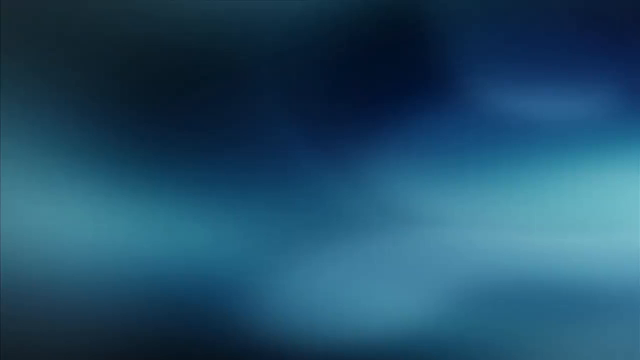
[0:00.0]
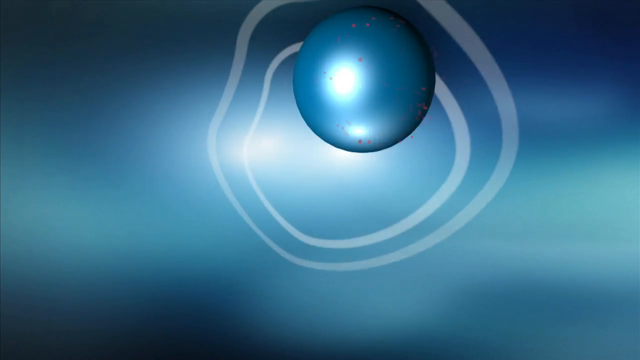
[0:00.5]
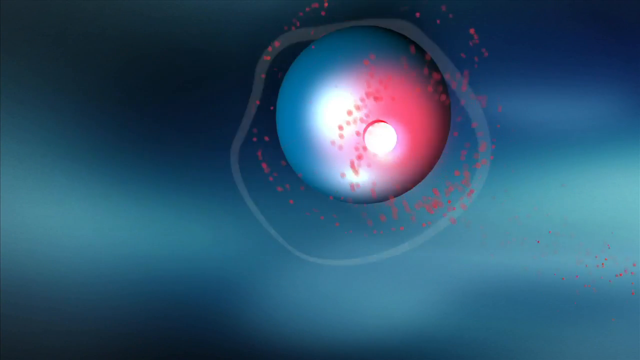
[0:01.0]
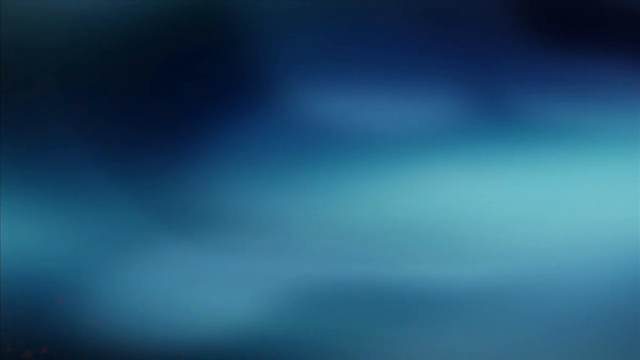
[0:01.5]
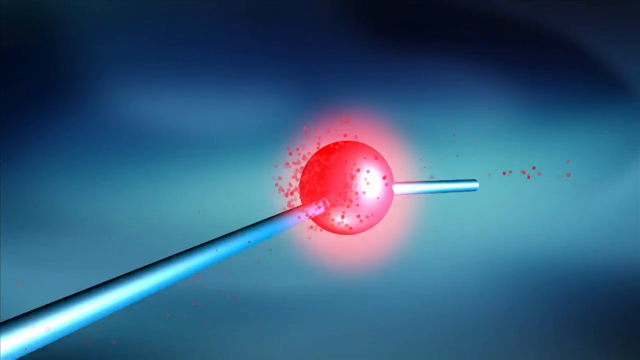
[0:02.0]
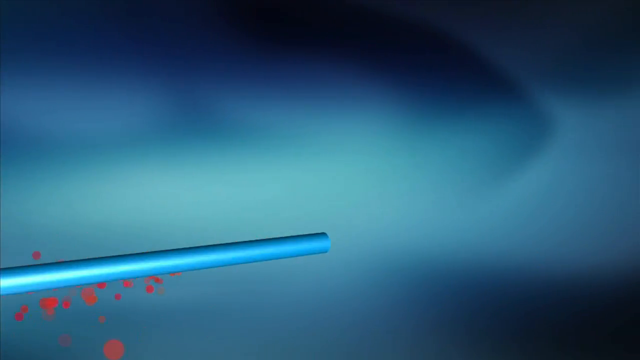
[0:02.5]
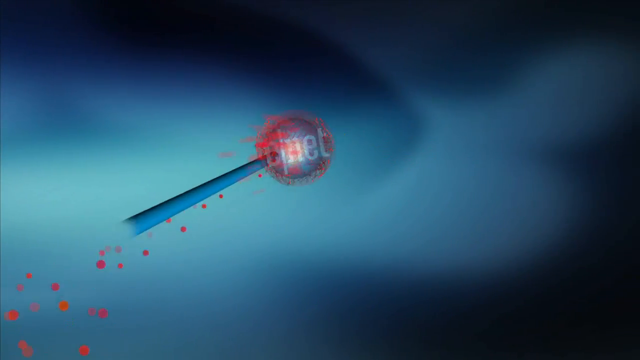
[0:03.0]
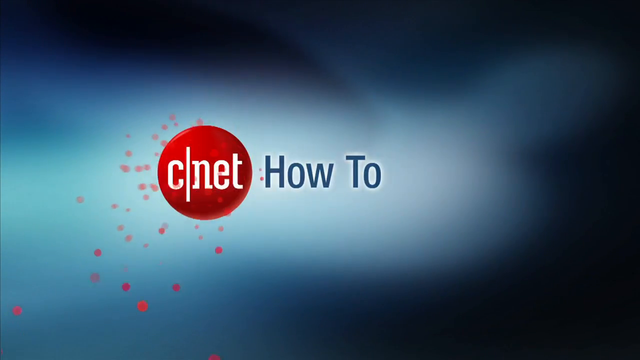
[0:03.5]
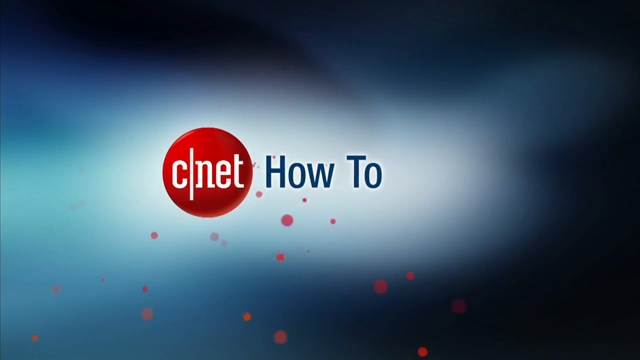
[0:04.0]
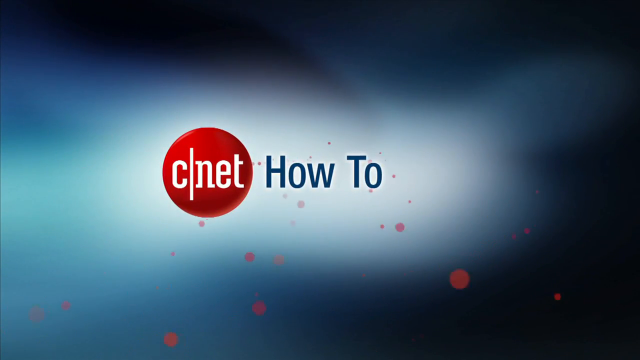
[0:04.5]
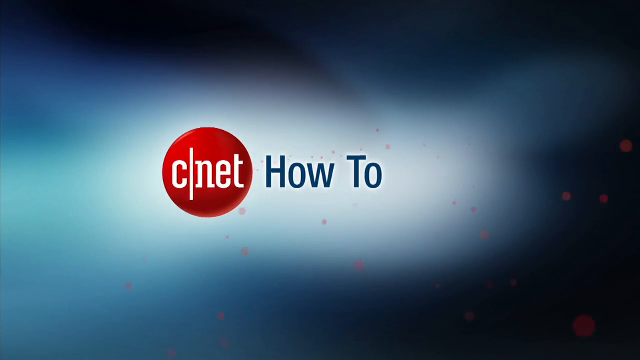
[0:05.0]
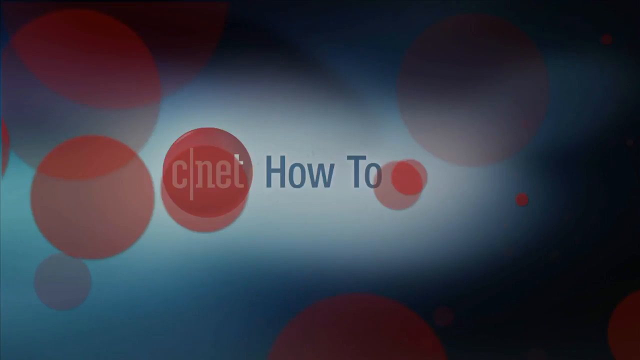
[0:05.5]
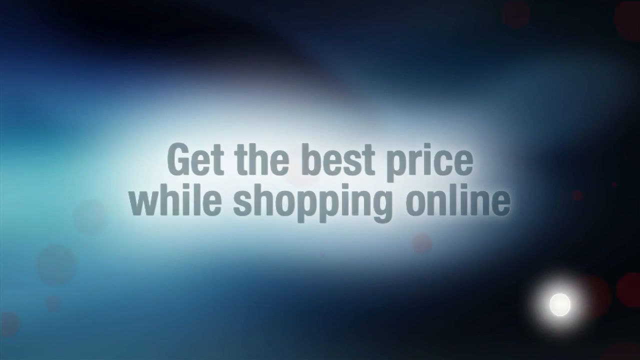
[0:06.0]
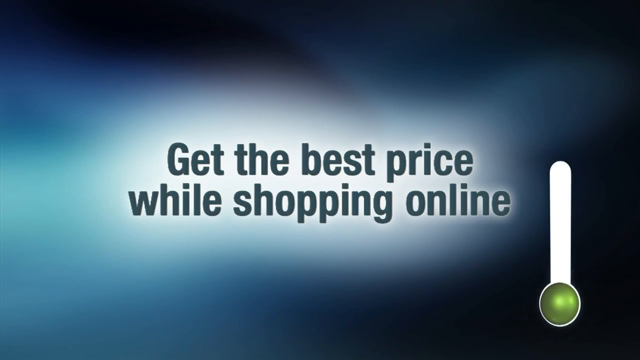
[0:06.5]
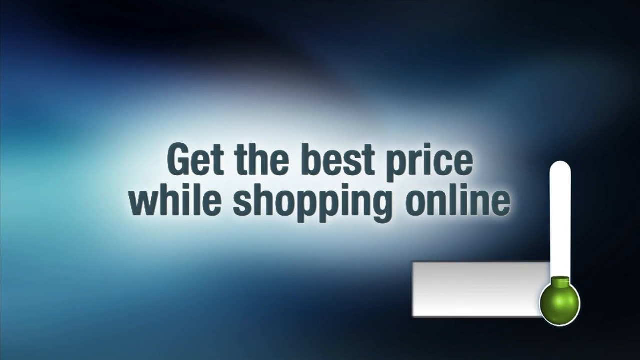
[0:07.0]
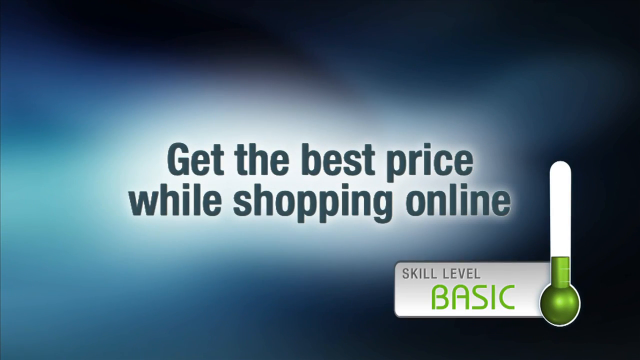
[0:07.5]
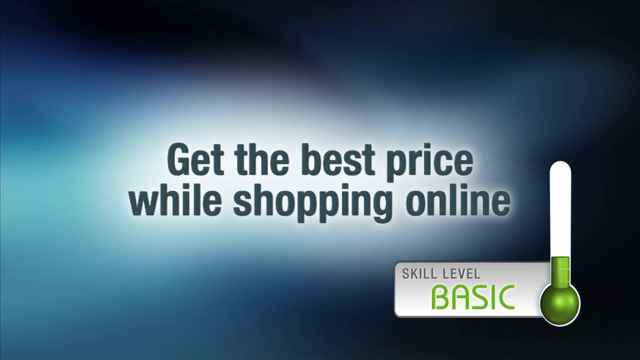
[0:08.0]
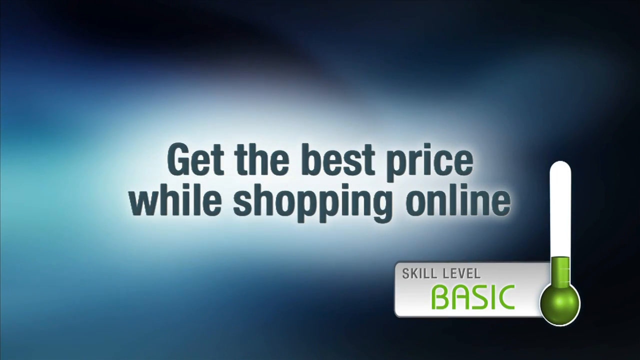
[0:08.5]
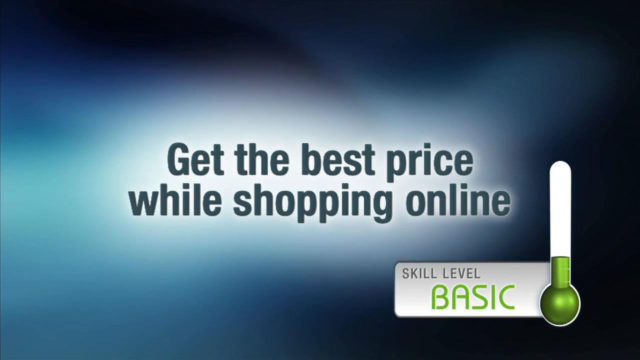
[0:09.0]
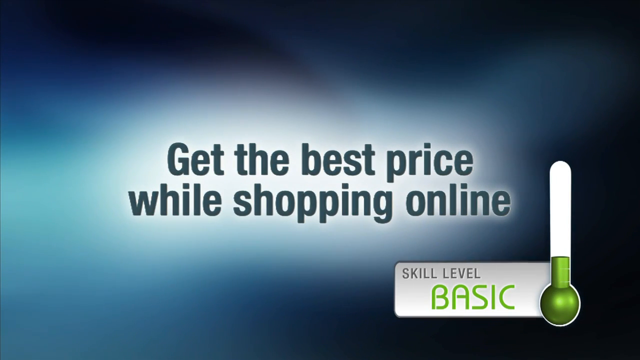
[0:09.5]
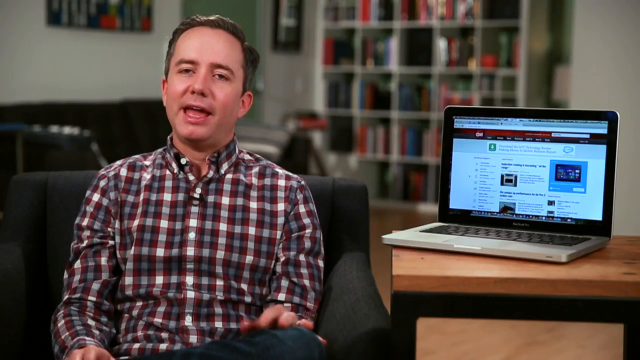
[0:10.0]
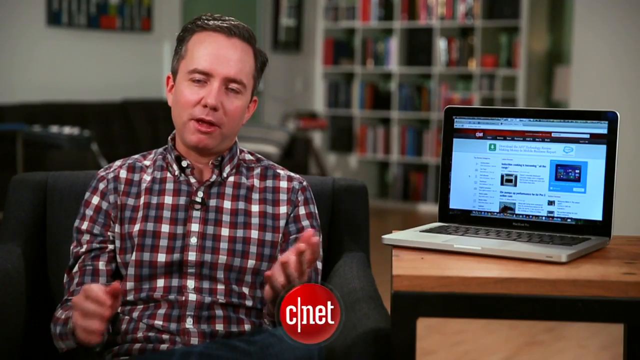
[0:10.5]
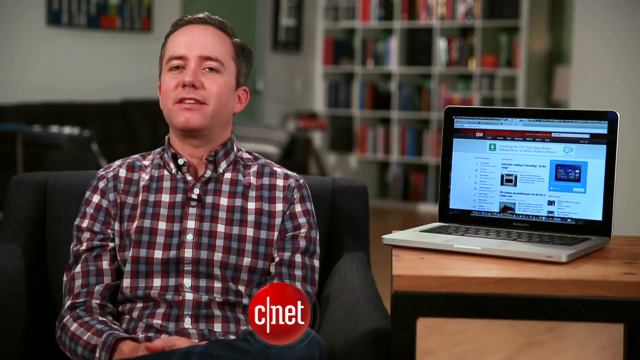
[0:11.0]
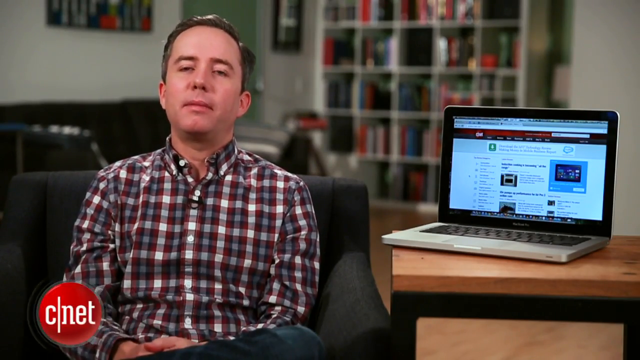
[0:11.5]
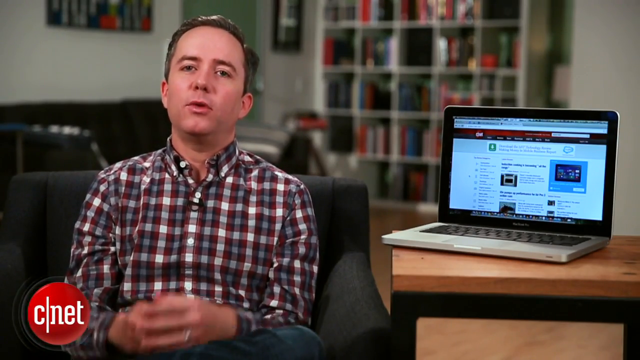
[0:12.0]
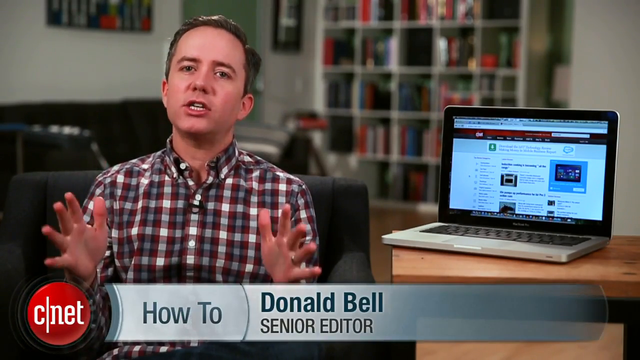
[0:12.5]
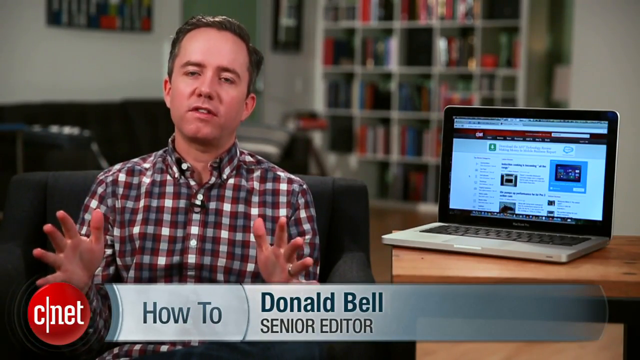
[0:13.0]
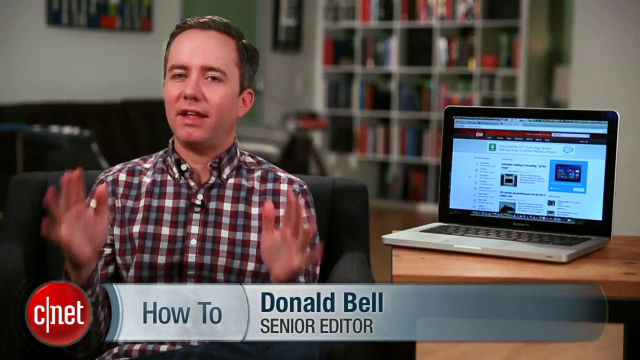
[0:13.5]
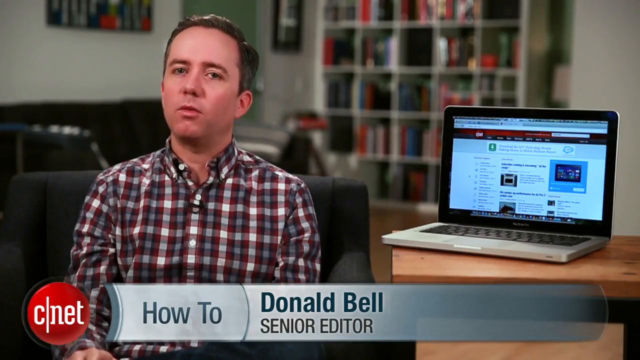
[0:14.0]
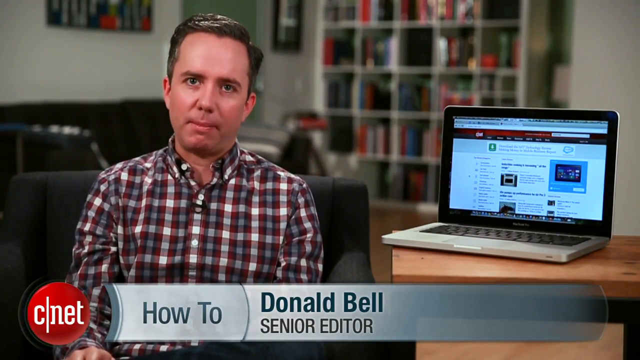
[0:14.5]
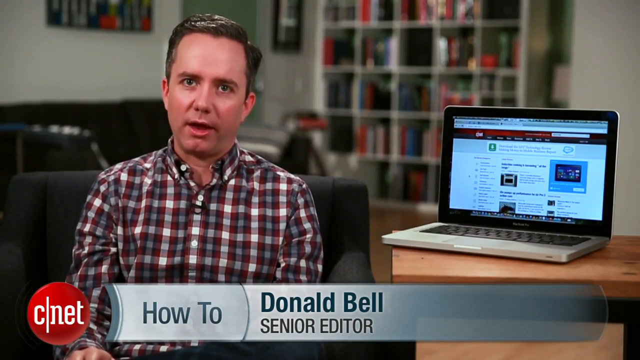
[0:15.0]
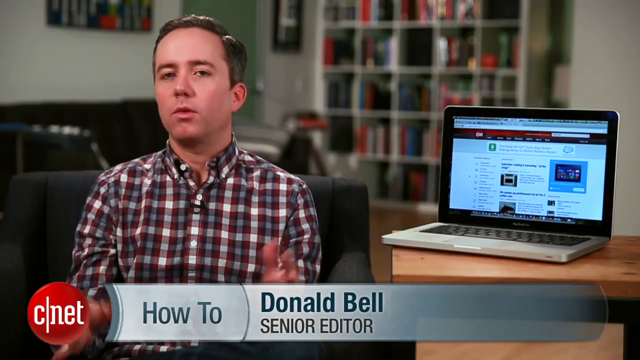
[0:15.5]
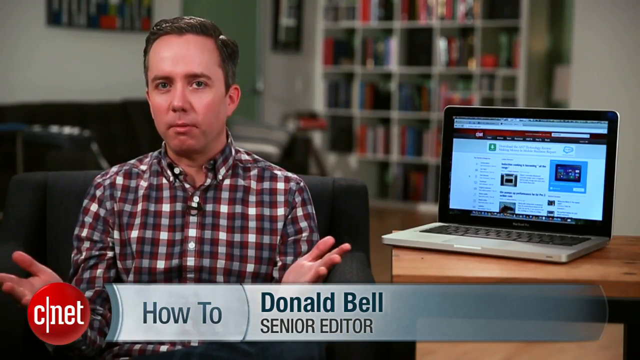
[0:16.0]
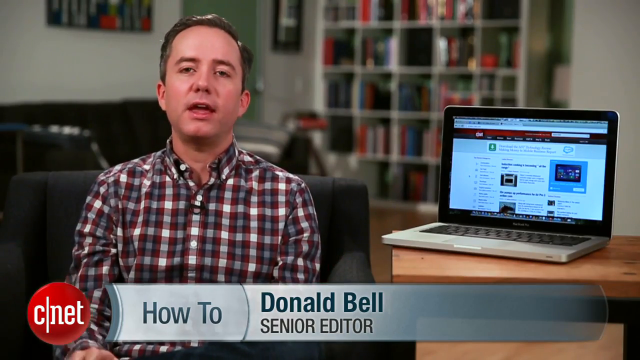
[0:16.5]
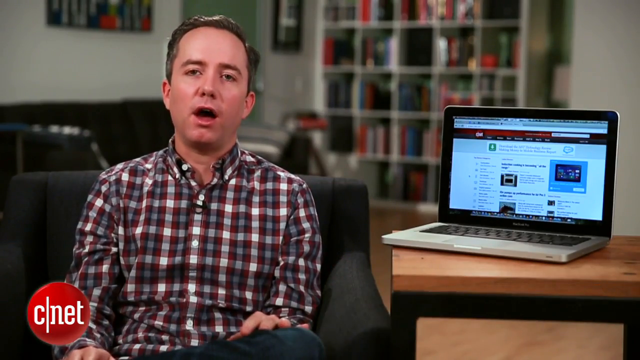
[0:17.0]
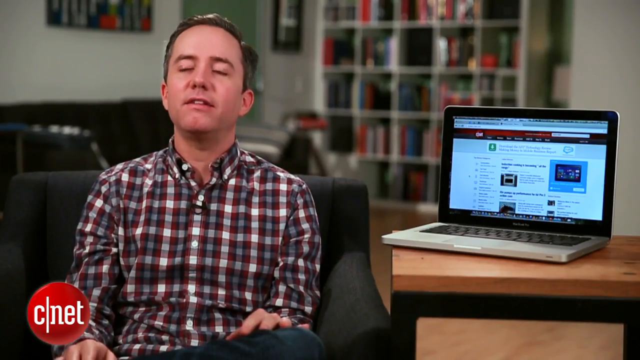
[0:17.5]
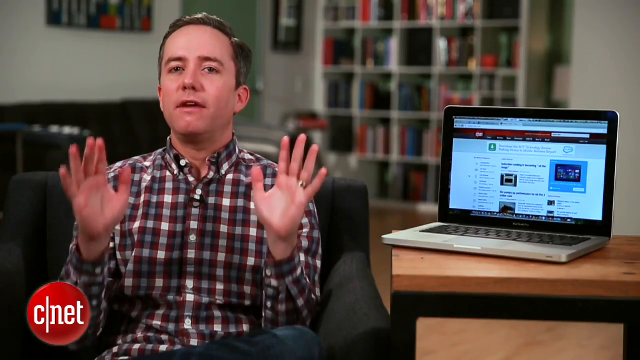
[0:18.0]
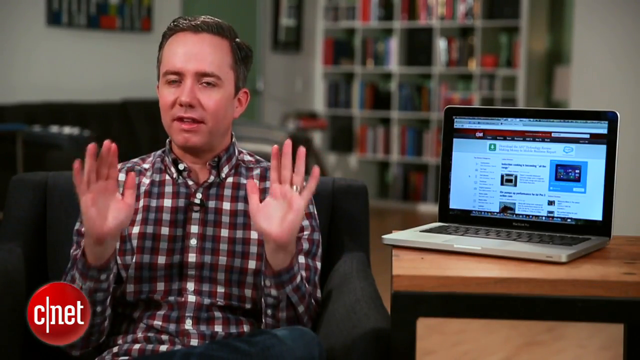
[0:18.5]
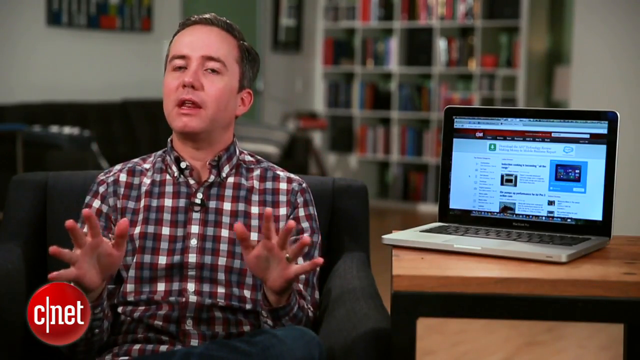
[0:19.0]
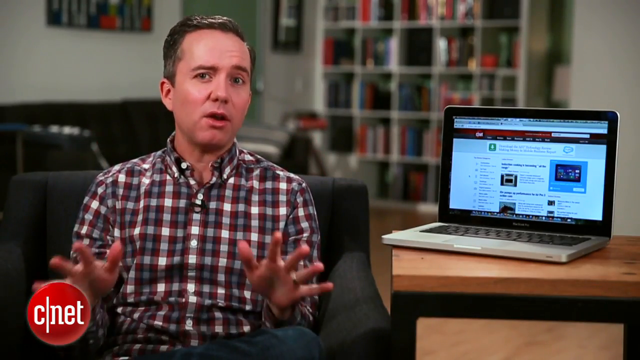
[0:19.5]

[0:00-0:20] An intro graphic introduces CNET, with a red logo and the text "get the best price while shopping online" / "how to get the best price while shopping online." On the right is a skill level of basic, shown with something kind of like a beaker in a green color. The text "how to Donald Bell, senior editor" appears as a chyron as the video moves to Donald Bell, a senior editor, who holds his hands out and speaks. He is a Caucasian man wearing some sort of checked flannel shirt, with a laptop computer in the background. He appears to be in kind of a residential area, with a kind of Ikea-style bookshelf holding a lot of books in the background and green paint; the bookshelf looks more of a white cream color.